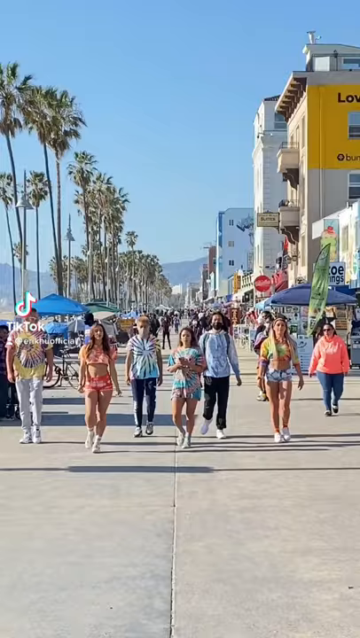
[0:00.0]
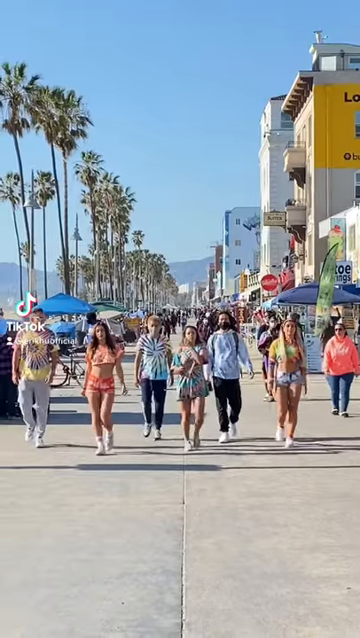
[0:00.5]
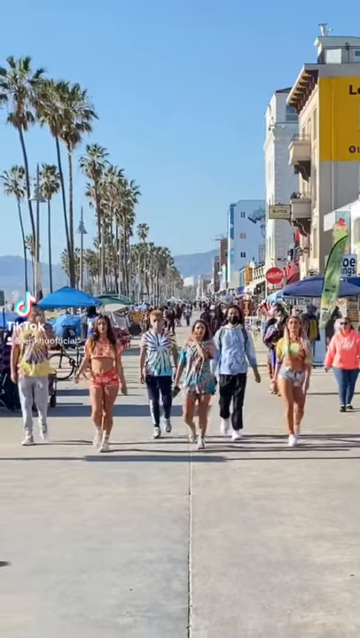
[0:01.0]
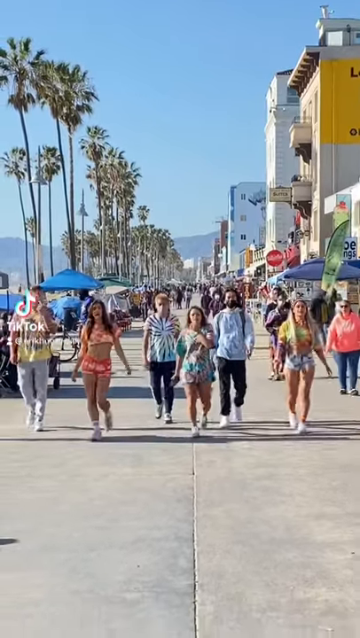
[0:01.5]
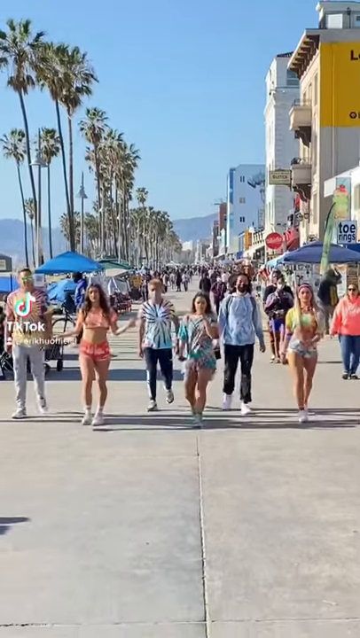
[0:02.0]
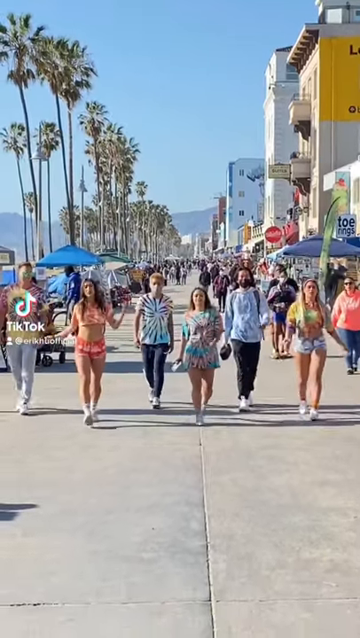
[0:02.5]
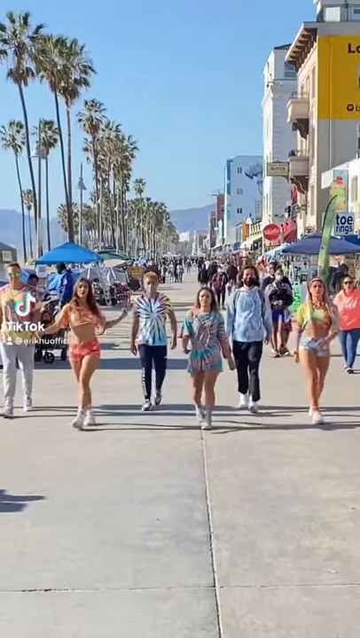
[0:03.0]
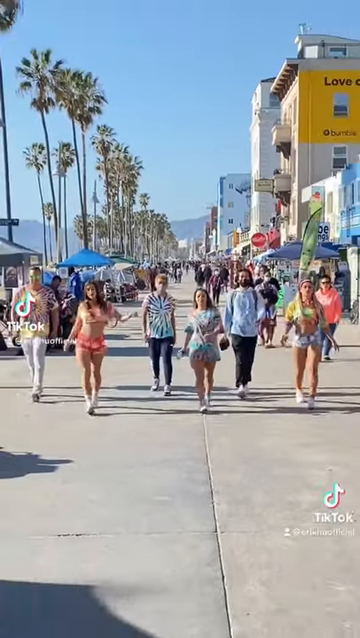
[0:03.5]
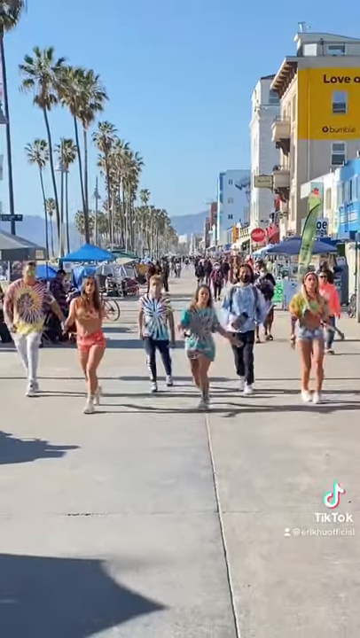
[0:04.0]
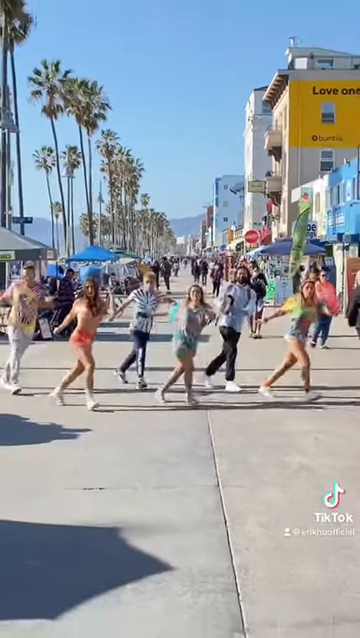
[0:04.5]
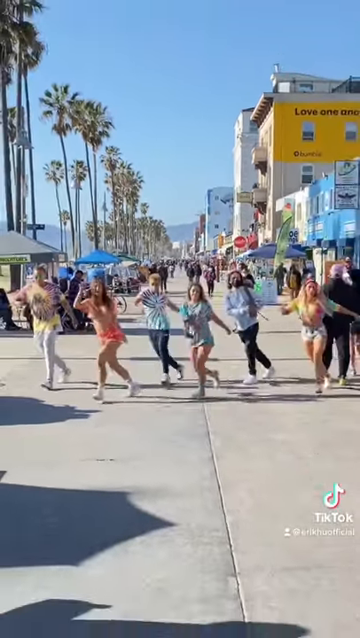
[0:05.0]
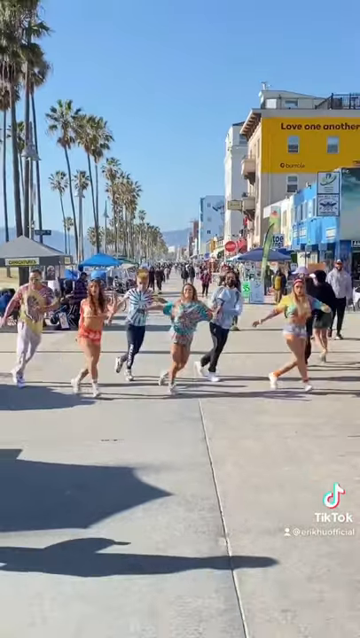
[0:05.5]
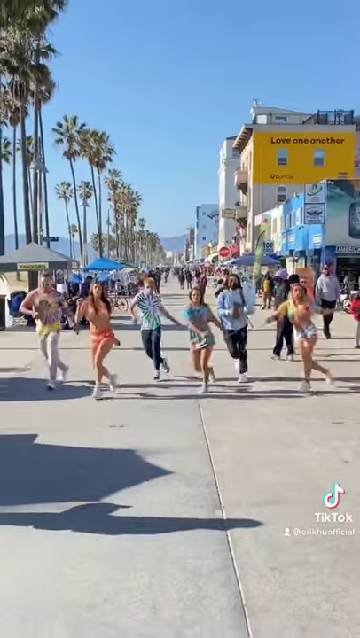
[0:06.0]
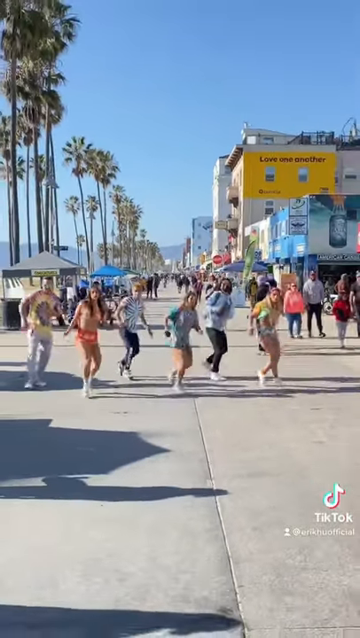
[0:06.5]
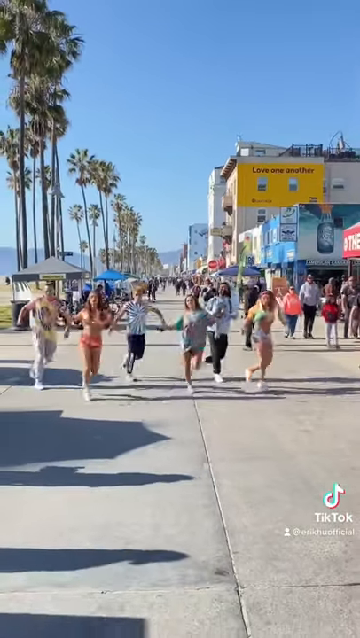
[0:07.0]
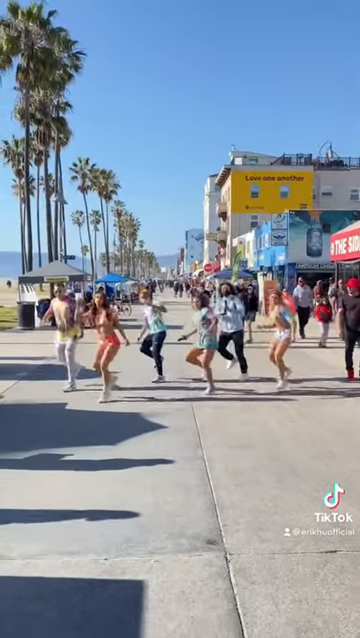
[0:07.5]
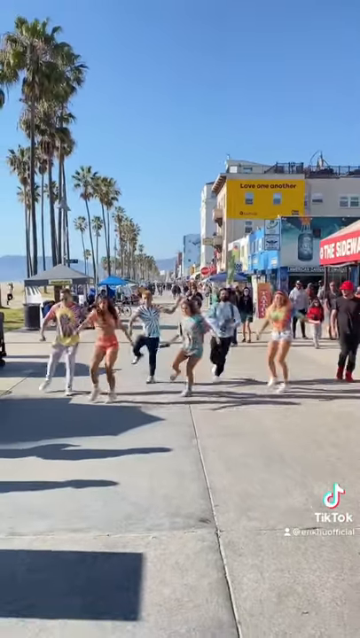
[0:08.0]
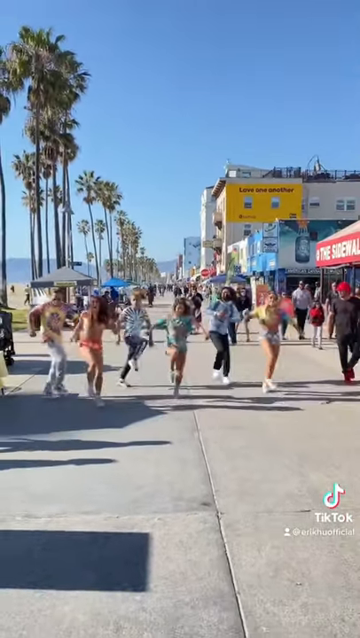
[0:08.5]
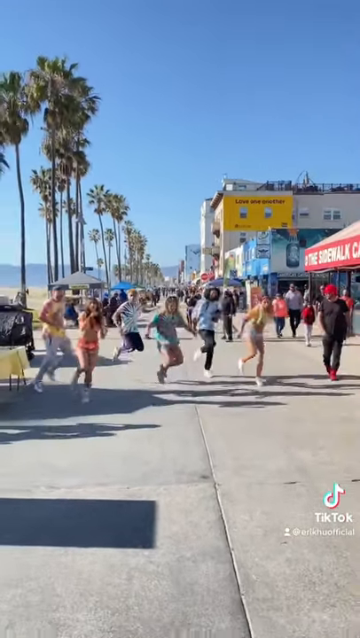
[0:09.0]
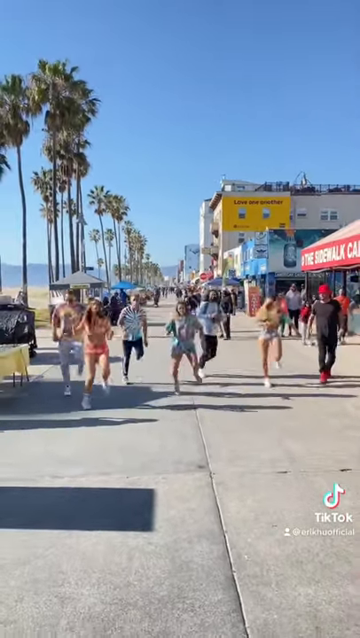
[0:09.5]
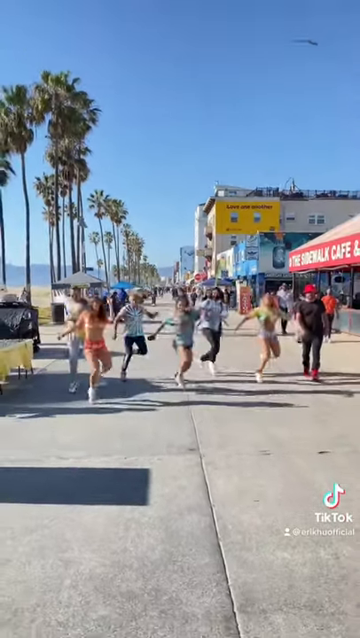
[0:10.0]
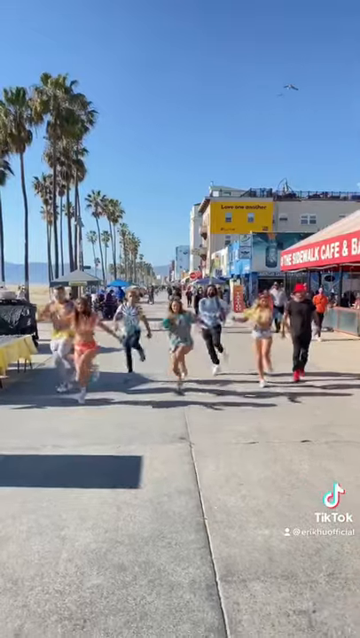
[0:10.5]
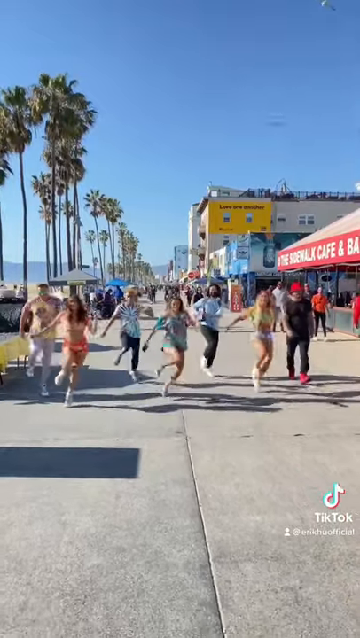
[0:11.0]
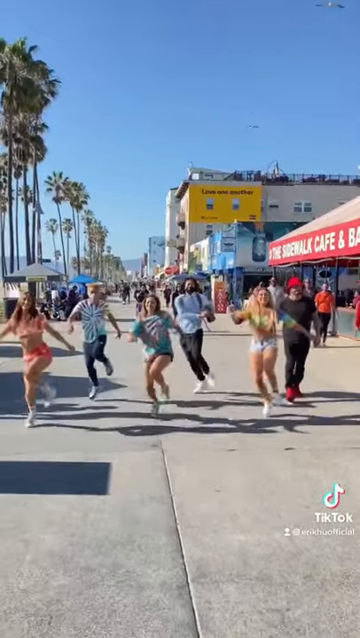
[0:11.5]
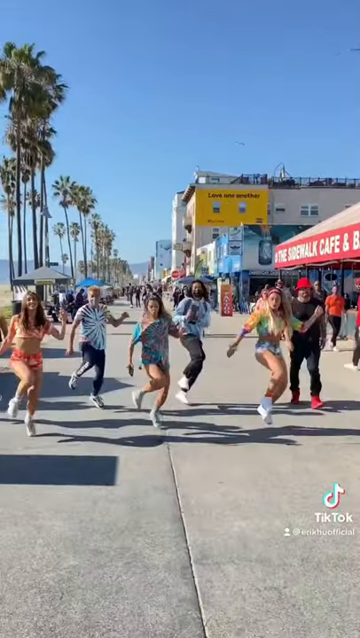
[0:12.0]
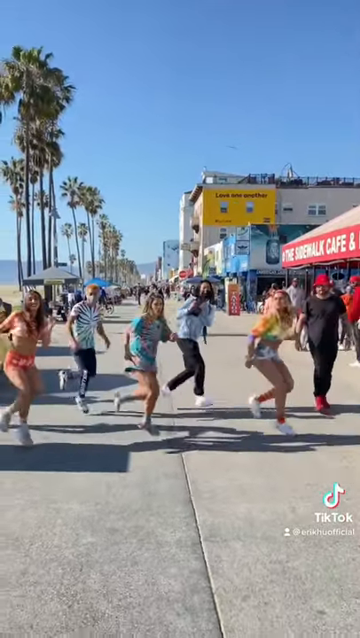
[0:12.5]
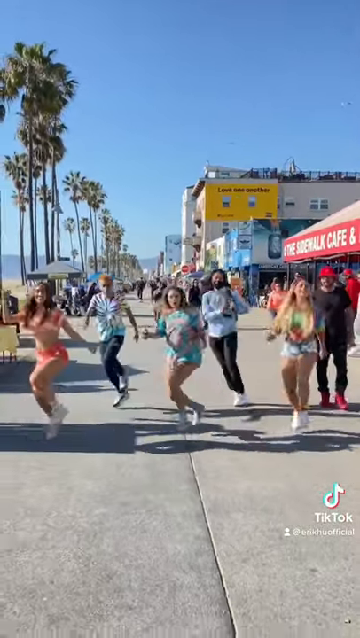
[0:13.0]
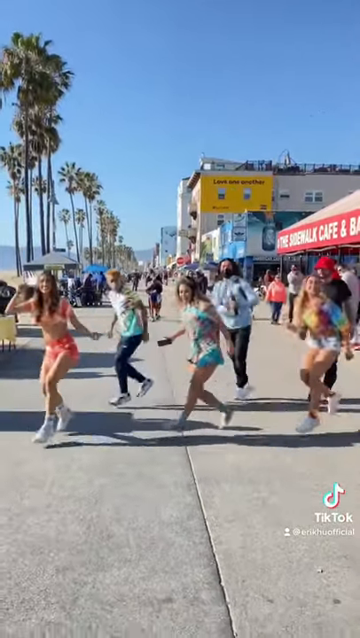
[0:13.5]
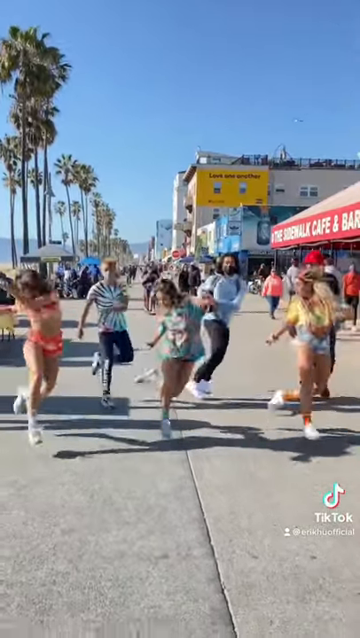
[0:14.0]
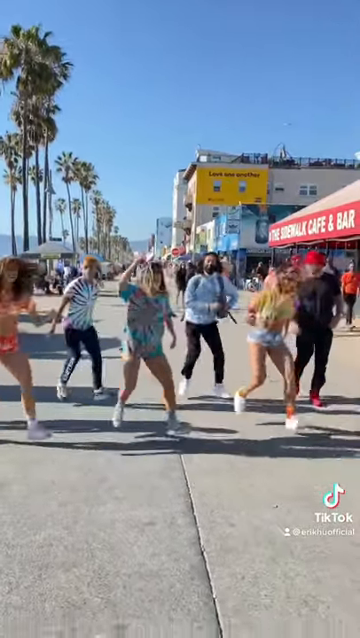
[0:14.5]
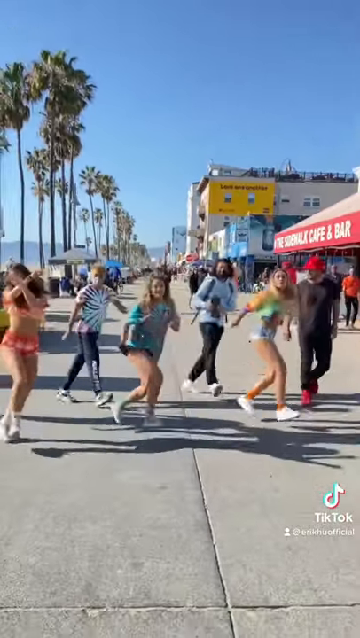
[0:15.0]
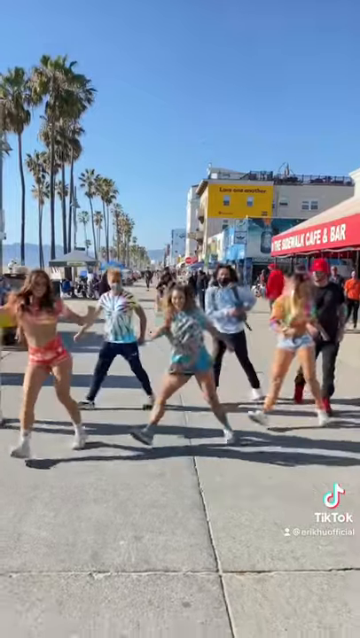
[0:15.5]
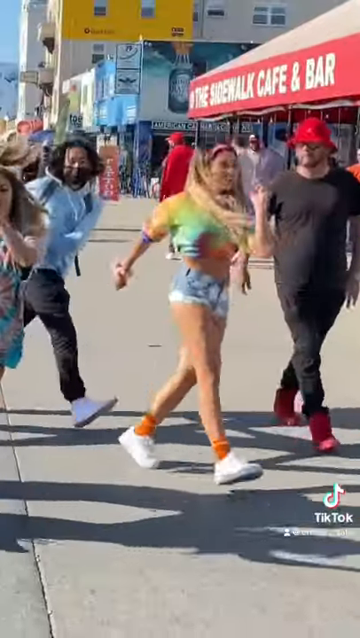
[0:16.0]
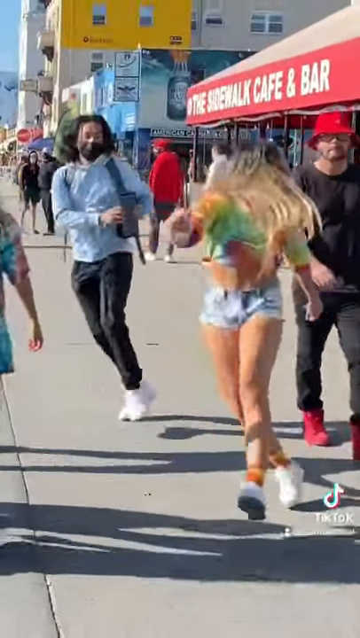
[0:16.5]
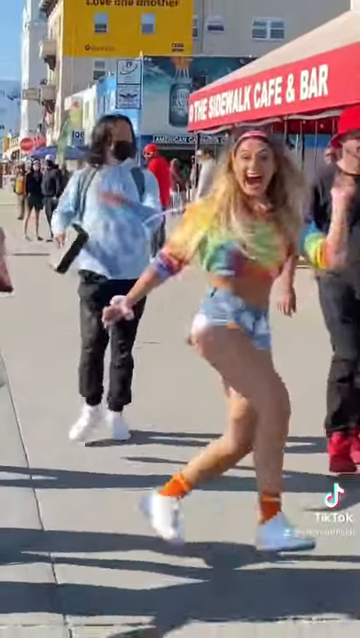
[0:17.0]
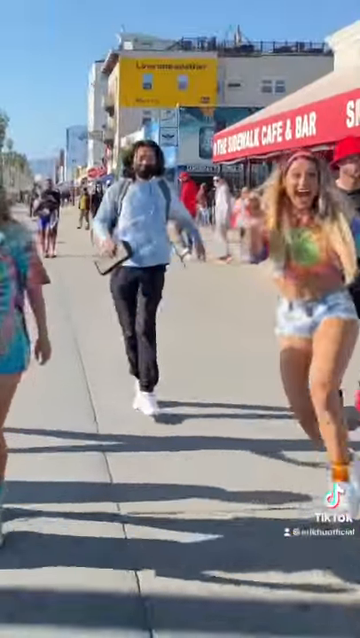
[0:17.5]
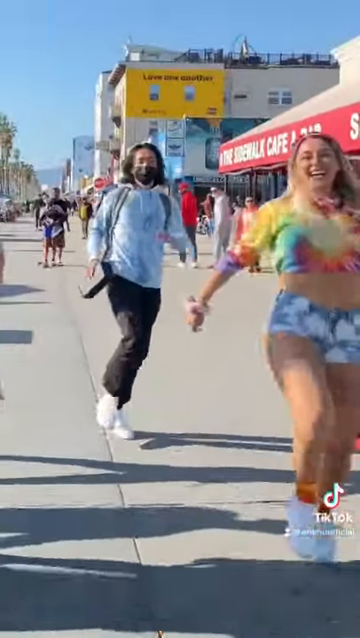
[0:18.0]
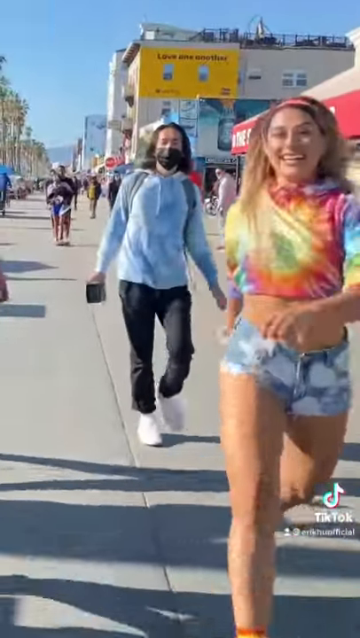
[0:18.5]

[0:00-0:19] On-screen text says it is a "TikTok shuffle dance." The setting looks like a beach boardwalk: a very blue sky, a cement boardwalk lined with palm trees, and buildings on the right side, with the ocean beach presumably to the left. Six individuals, apparently three girls and three boys, walk down the street and then break into dance. People mill about in the background, seemingly enjoying the day, but the focus is mostly on the six dancers, who do a kind of hip hop dance. It looks choreographed; they are all in sync, kicking their legs out. The men wear longer pants, and the girls wear brightly colored shorts with beach wear tops or t-shirts. Lots of shadows are visible off to the left. At the end, the camera focuses on one girl wearing a tie-dyed shirt. It looks like a beautiful day on the boardwalk, and the group looks like they are having fun with their dance.